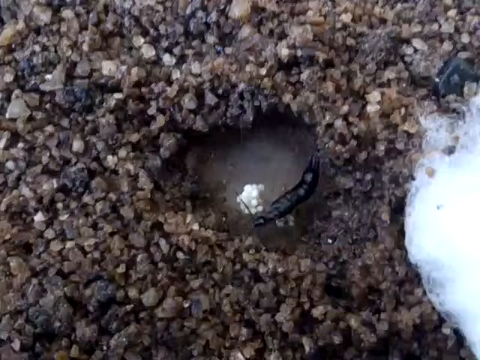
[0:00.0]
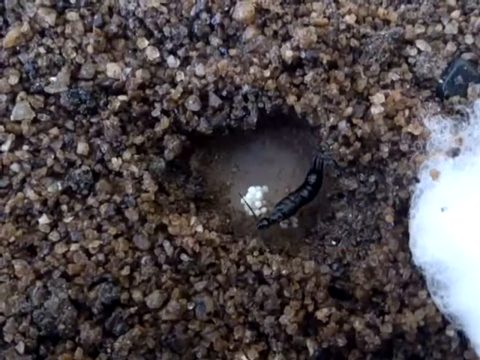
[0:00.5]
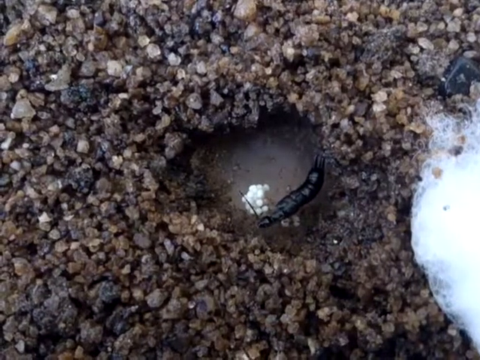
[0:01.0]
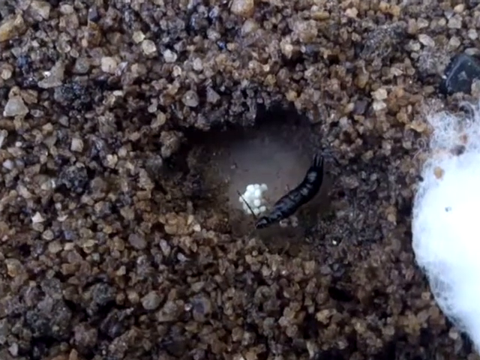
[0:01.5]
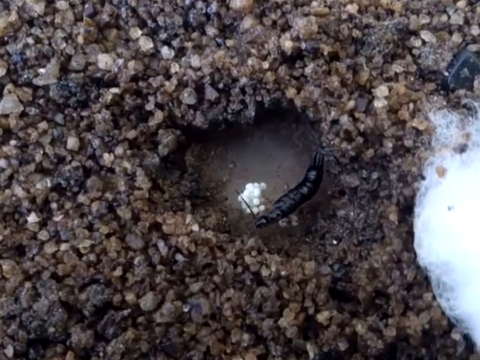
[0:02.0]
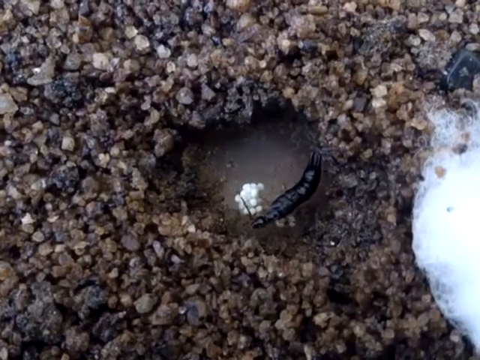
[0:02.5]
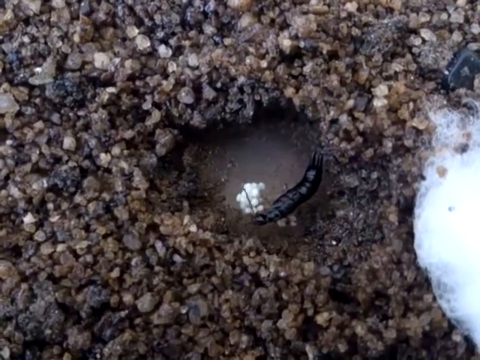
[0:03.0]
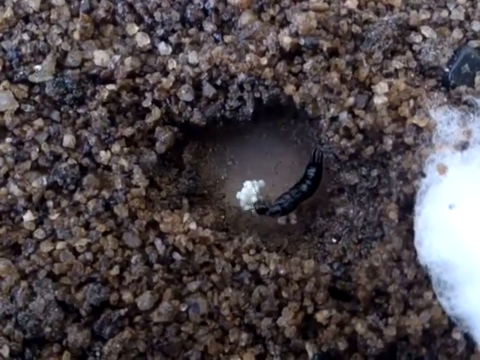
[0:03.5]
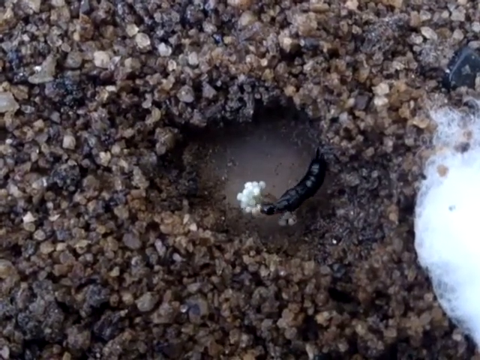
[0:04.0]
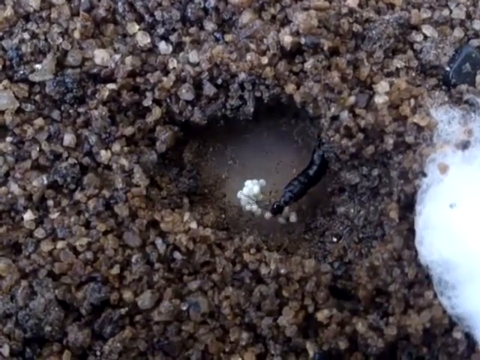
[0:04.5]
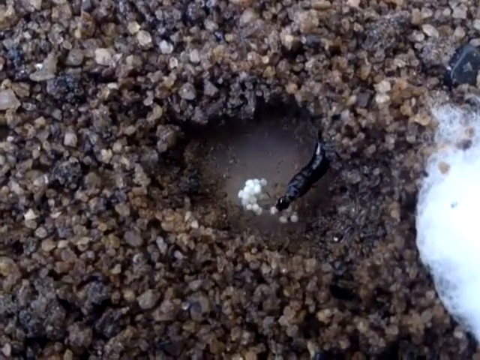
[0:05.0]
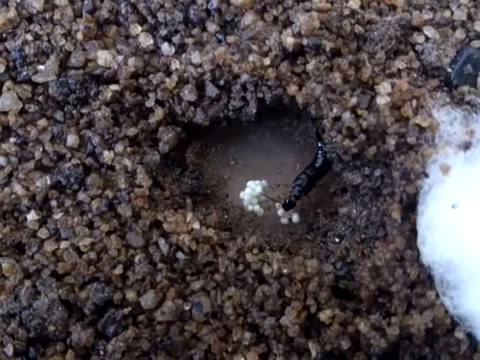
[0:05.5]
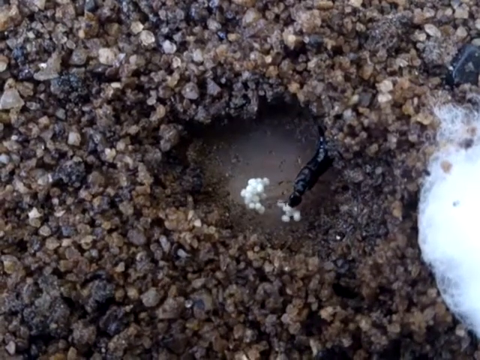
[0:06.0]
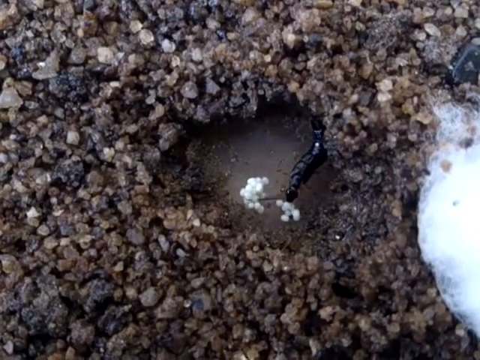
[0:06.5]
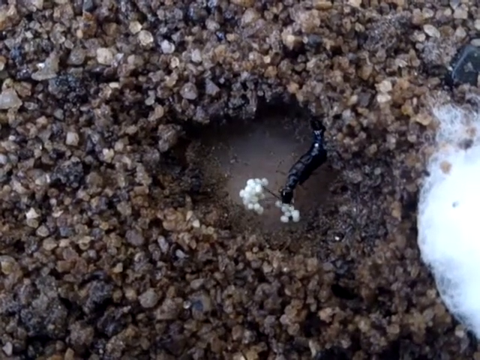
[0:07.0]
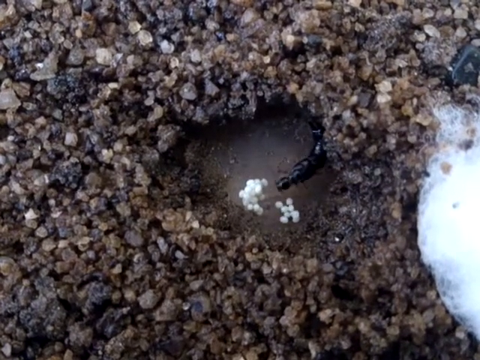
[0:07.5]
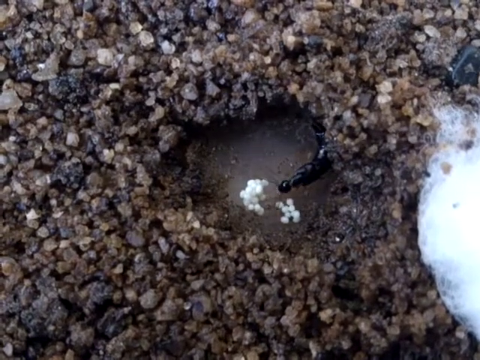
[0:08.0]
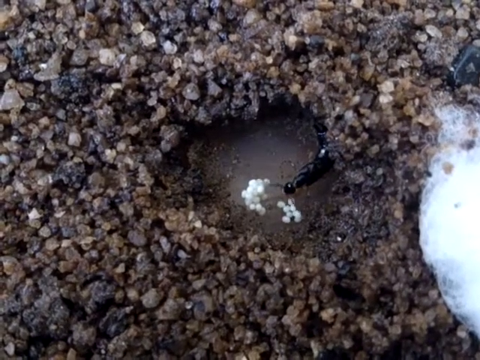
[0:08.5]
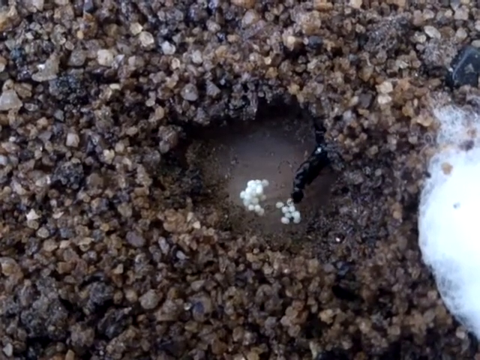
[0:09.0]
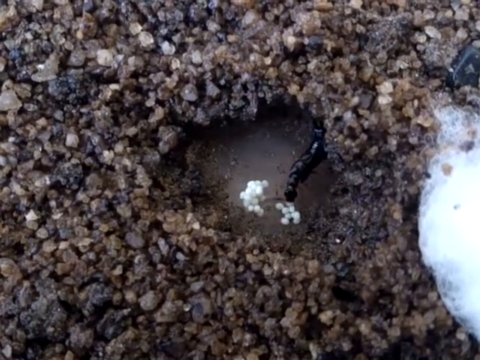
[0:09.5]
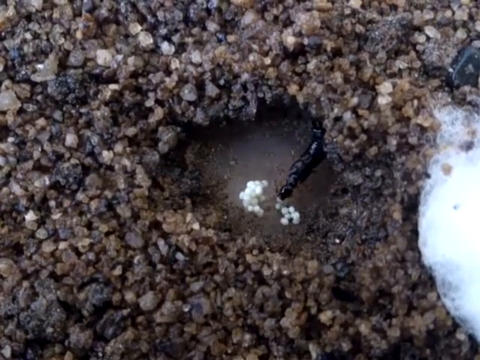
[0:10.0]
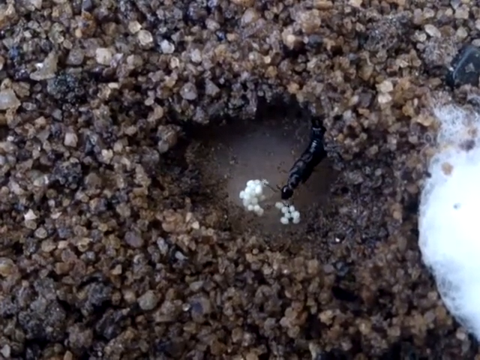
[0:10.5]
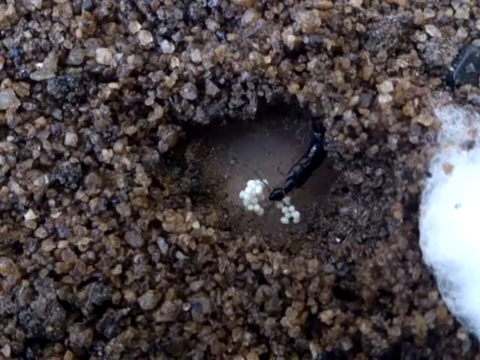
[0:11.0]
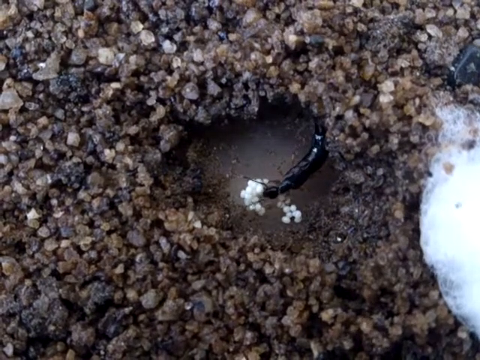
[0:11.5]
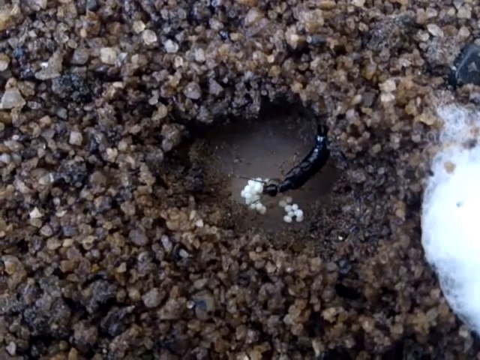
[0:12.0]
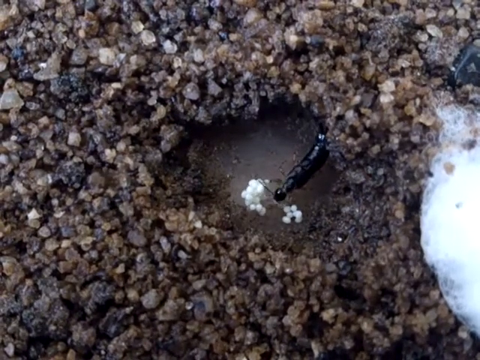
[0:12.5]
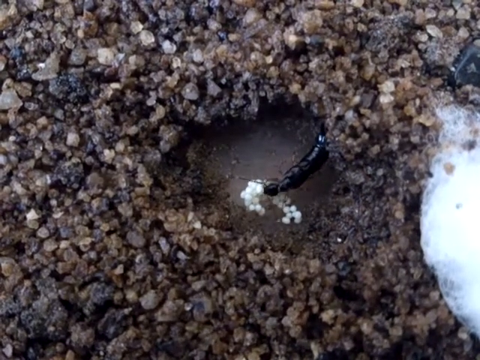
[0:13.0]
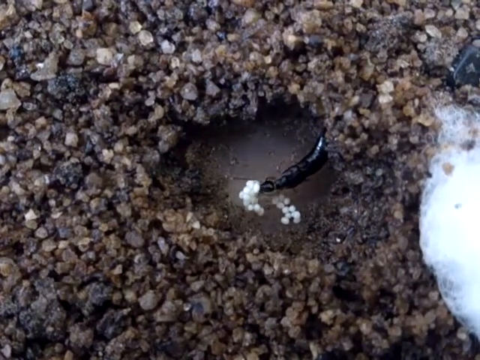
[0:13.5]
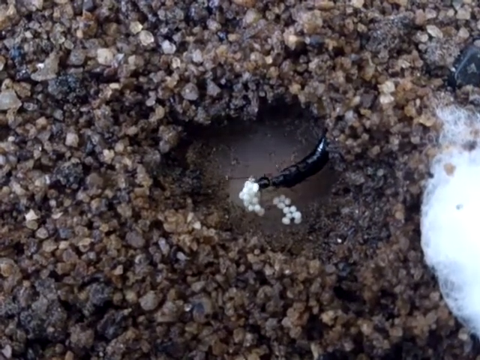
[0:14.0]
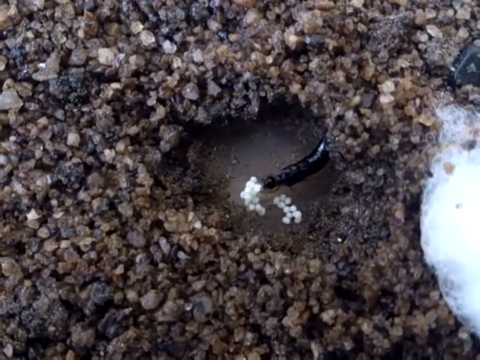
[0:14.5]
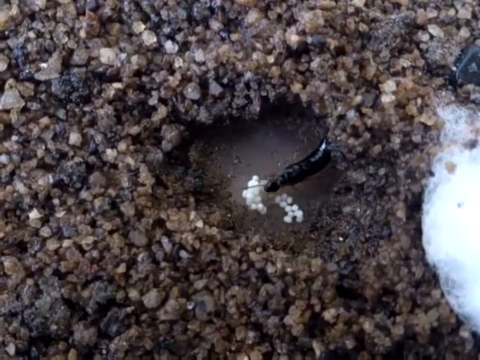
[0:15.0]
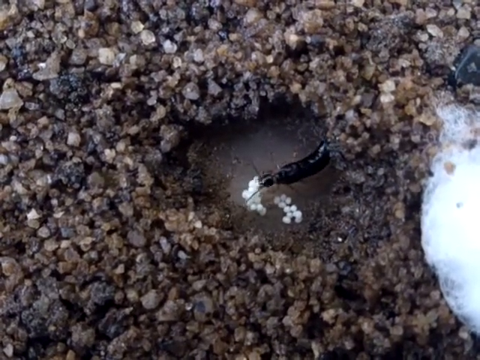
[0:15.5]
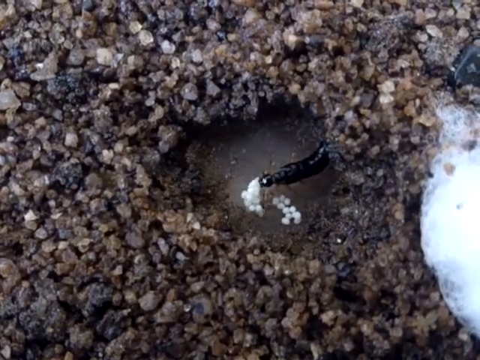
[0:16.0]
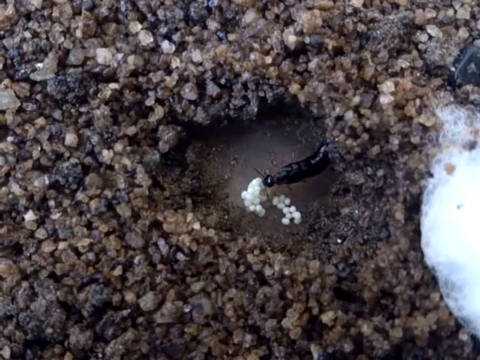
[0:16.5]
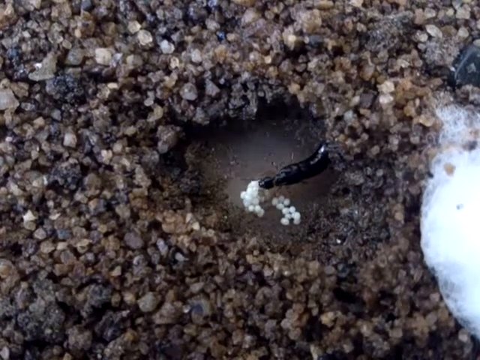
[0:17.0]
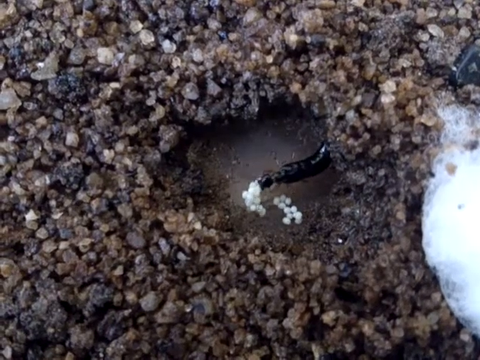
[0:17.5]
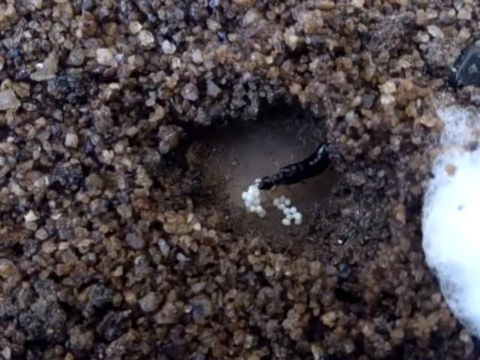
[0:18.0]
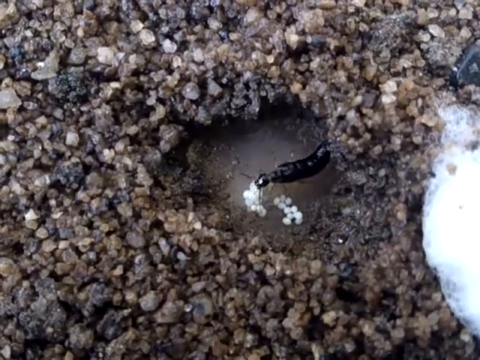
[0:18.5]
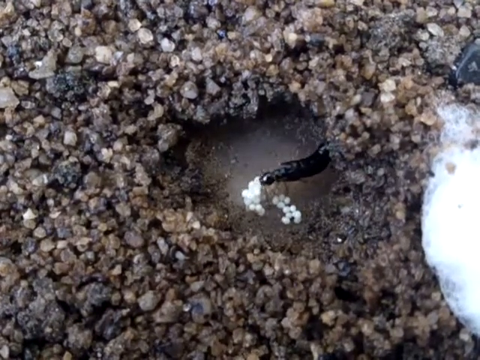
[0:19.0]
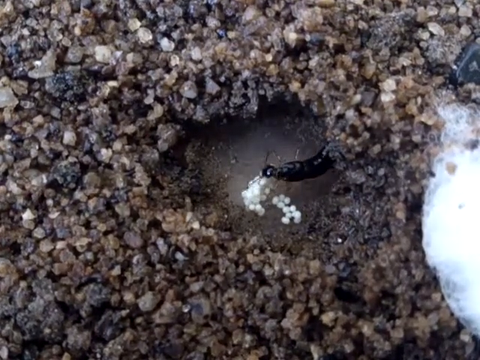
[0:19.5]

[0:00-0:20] A very small pool of water, which looks to be about the size of an adult's palm, lies amid very gravelly ground. The pool is very shallow, holding roughly a half to three quarters of a cup of water. Some sort of insect is in the pool; it is black and long, with a long black antenna. The insect moves around small white balls that are in the water, possibly eggs or possibly some sort of food. The insect picks up one of the balls and moves it to another spot in the small pool, for no obvious reason. The balls are not being moved to more cover, but they do appear to be moved so that they are spaced a little further apart.